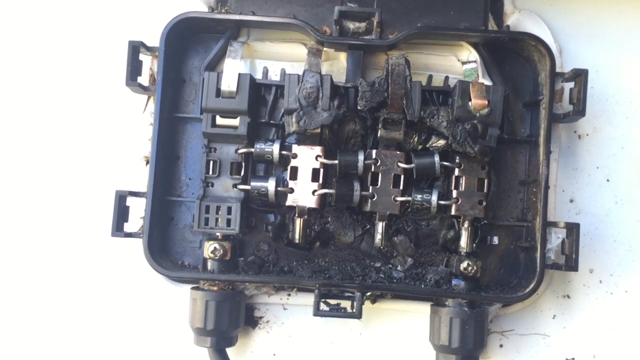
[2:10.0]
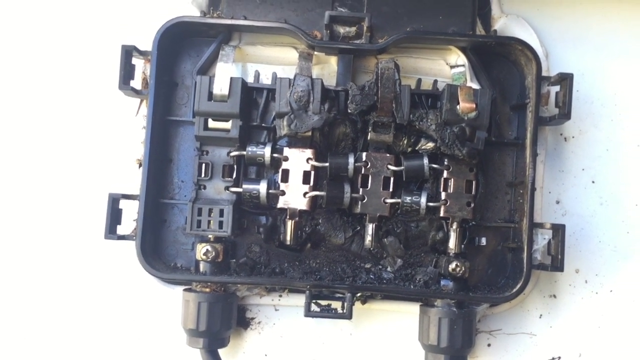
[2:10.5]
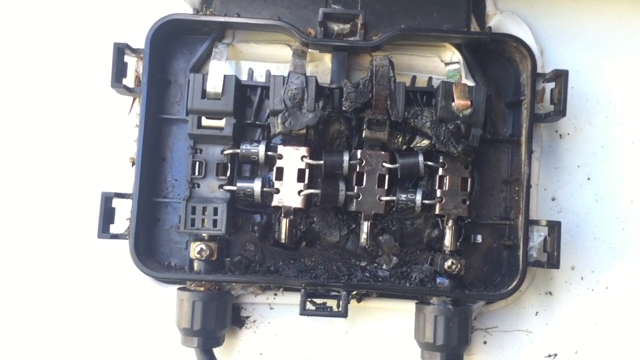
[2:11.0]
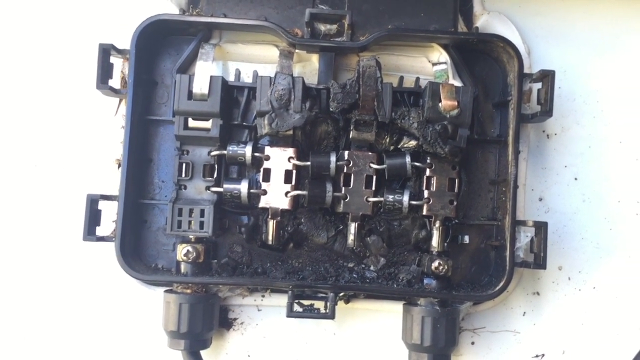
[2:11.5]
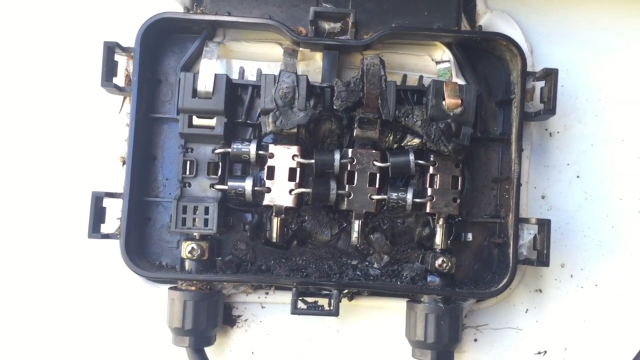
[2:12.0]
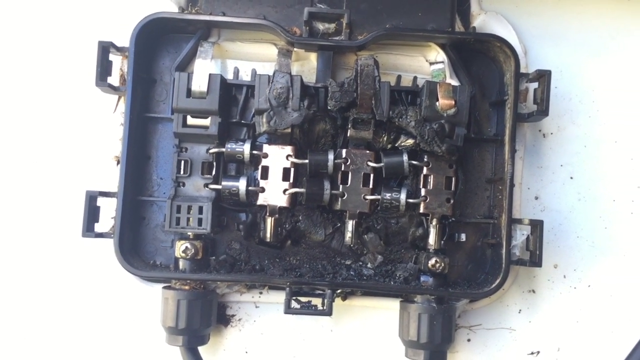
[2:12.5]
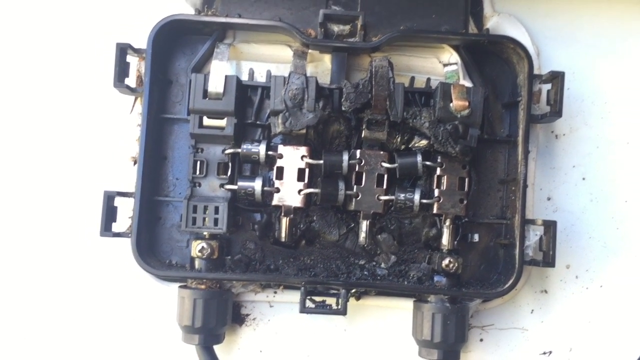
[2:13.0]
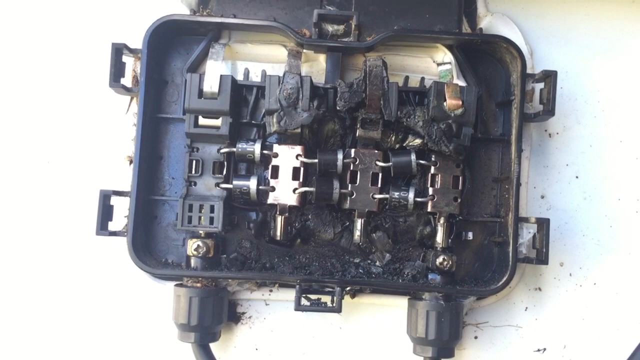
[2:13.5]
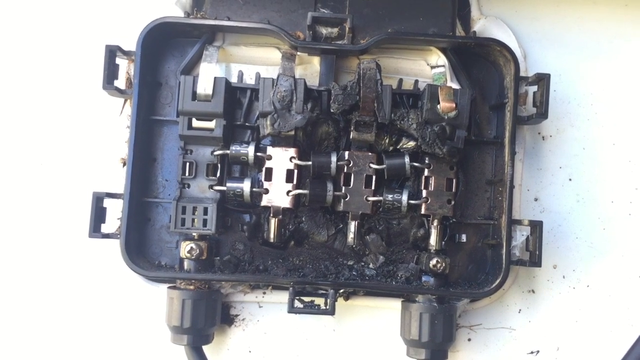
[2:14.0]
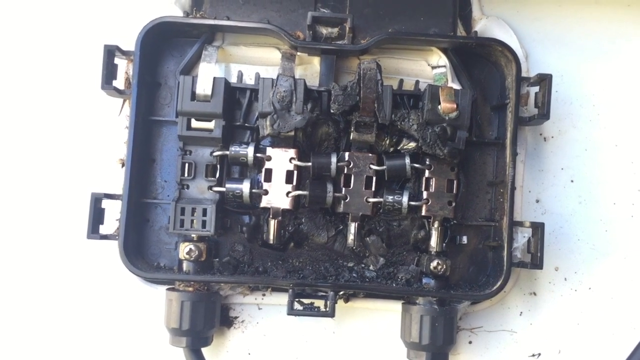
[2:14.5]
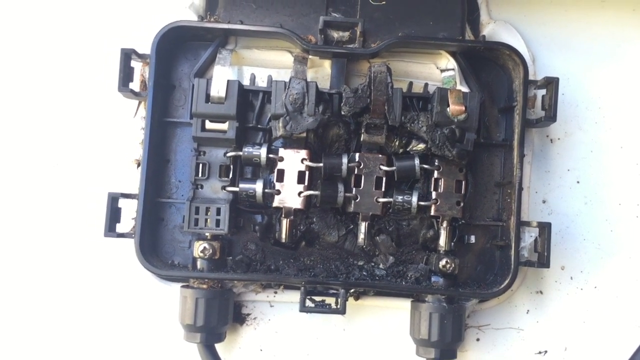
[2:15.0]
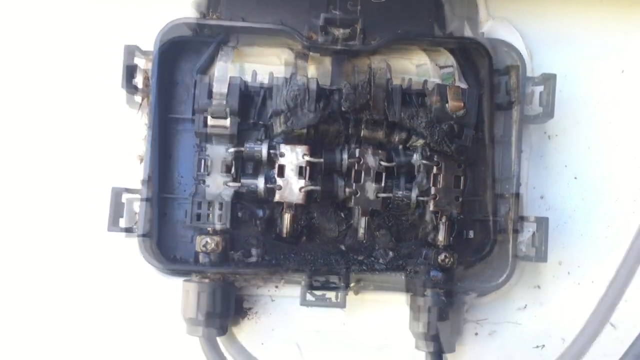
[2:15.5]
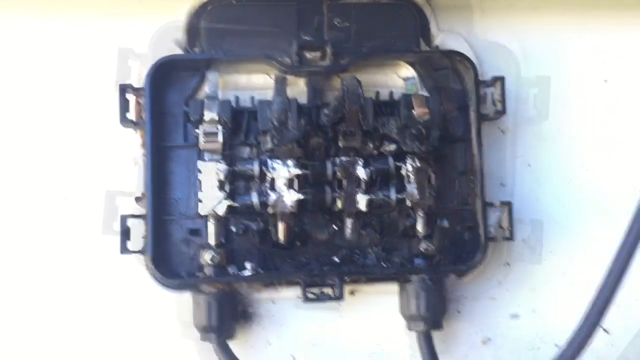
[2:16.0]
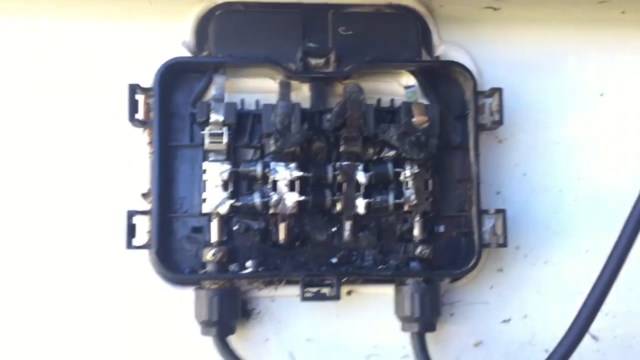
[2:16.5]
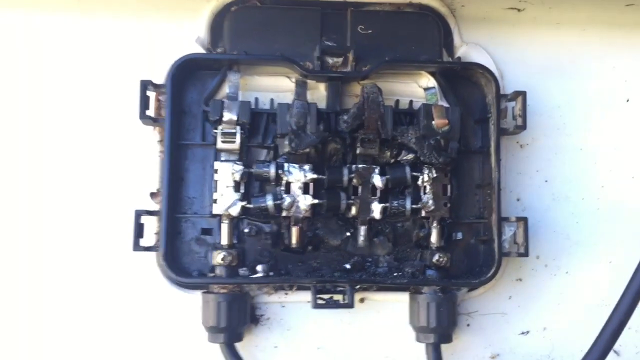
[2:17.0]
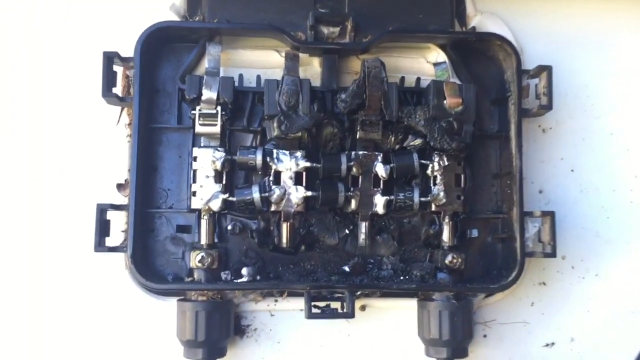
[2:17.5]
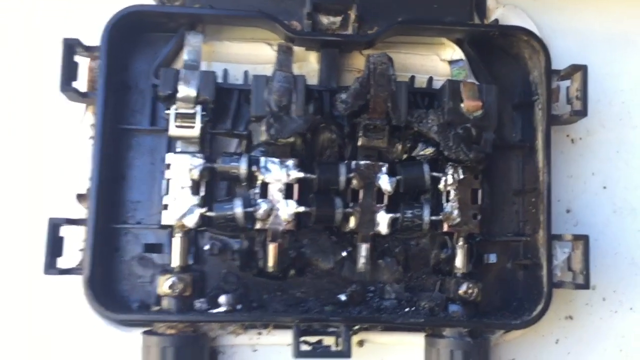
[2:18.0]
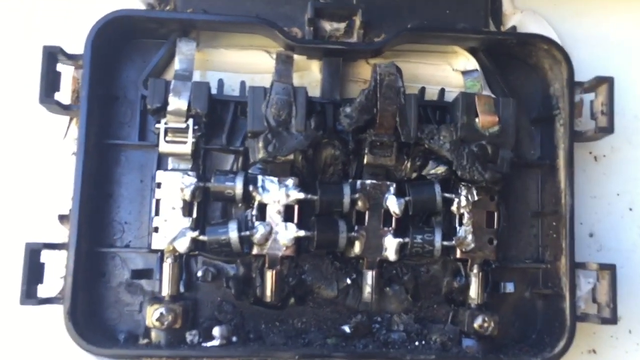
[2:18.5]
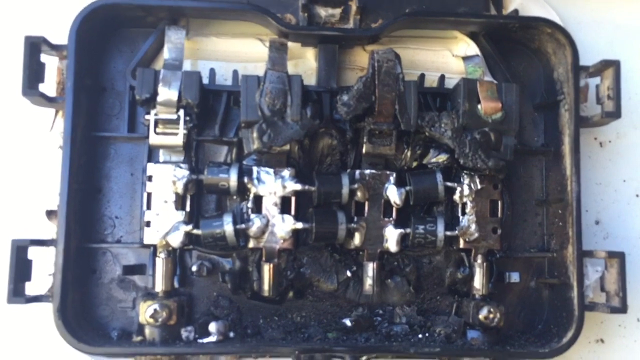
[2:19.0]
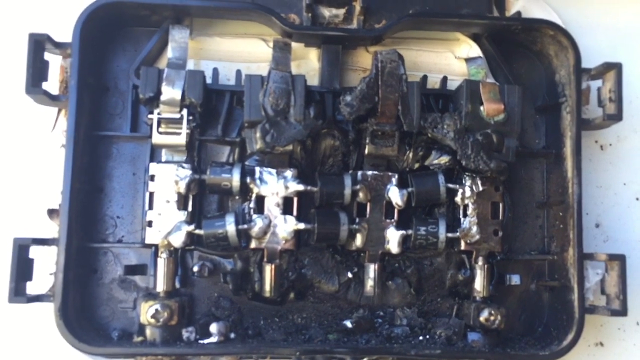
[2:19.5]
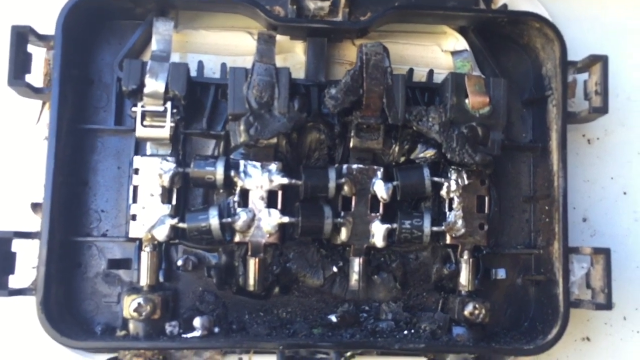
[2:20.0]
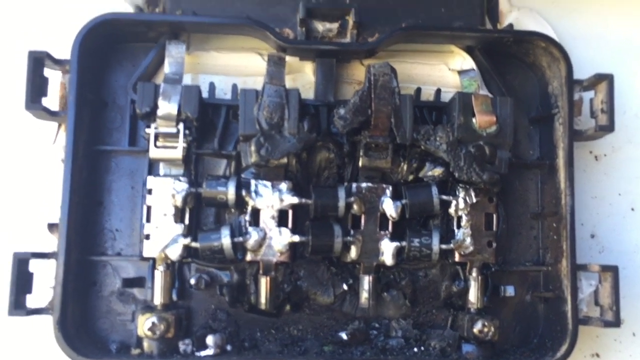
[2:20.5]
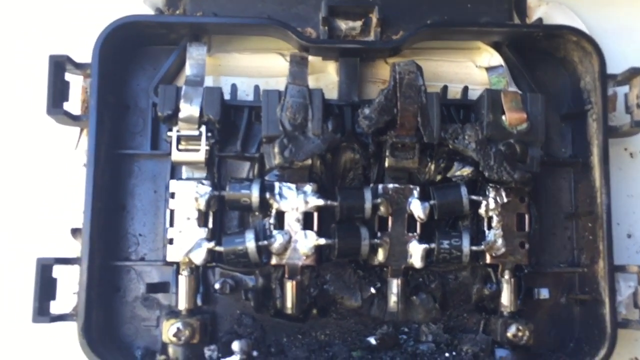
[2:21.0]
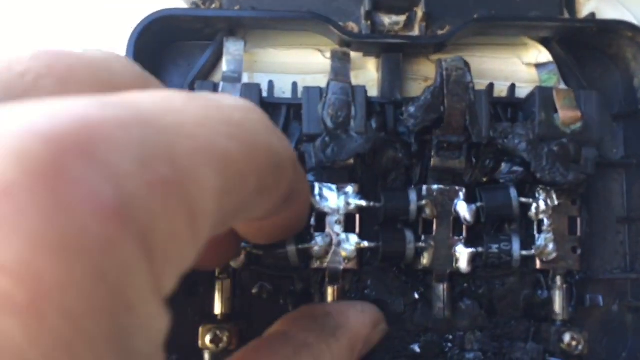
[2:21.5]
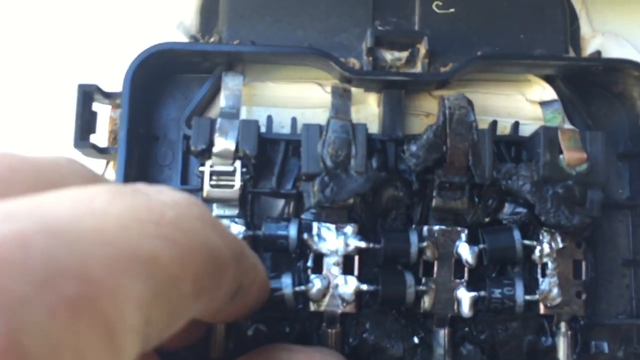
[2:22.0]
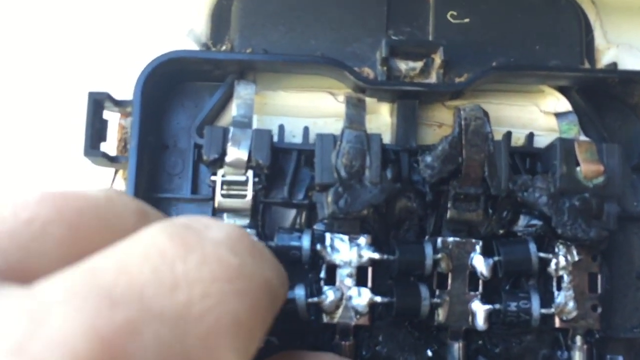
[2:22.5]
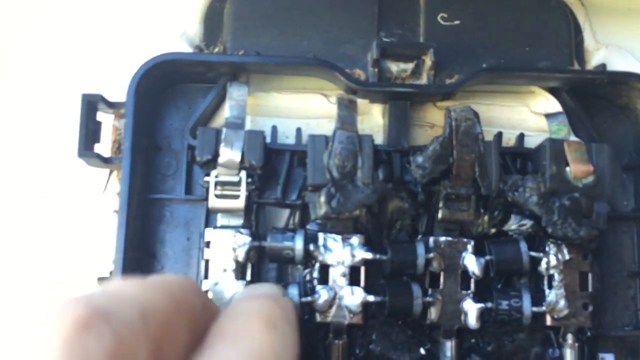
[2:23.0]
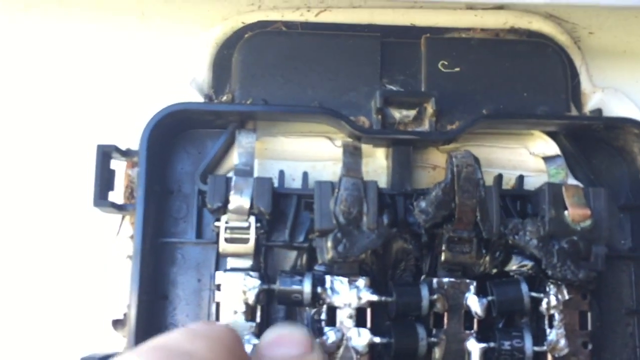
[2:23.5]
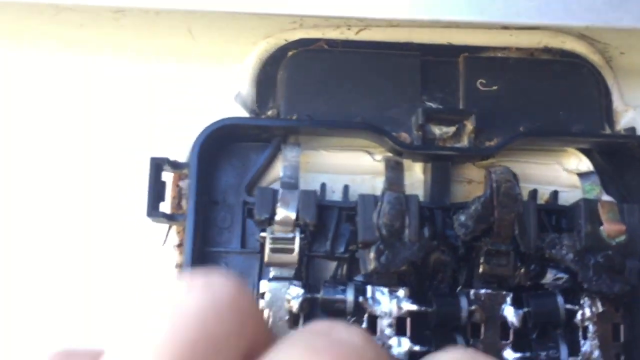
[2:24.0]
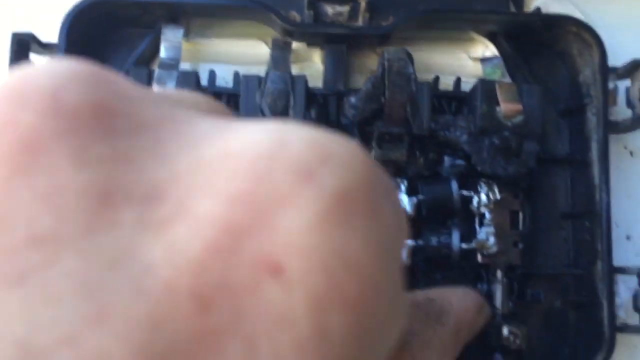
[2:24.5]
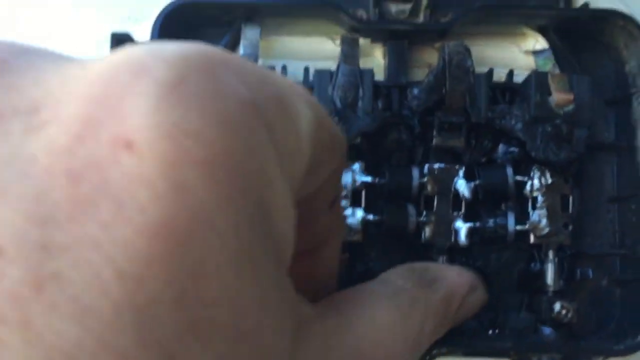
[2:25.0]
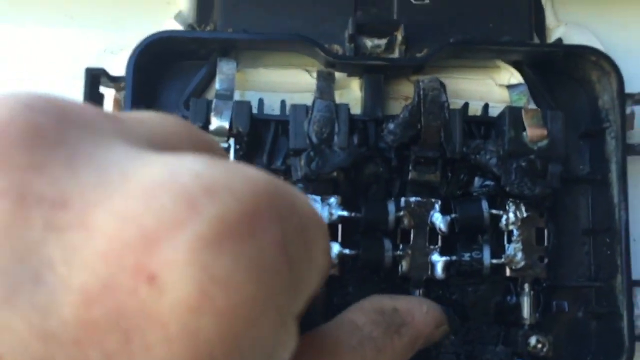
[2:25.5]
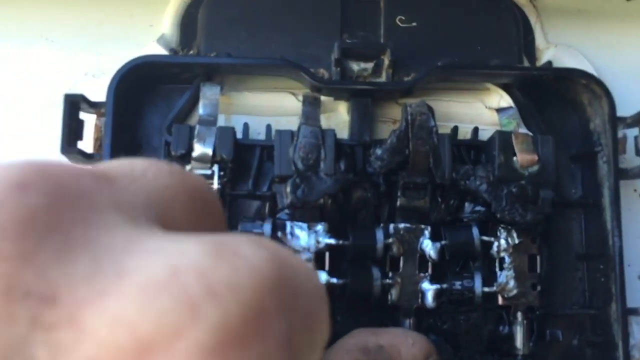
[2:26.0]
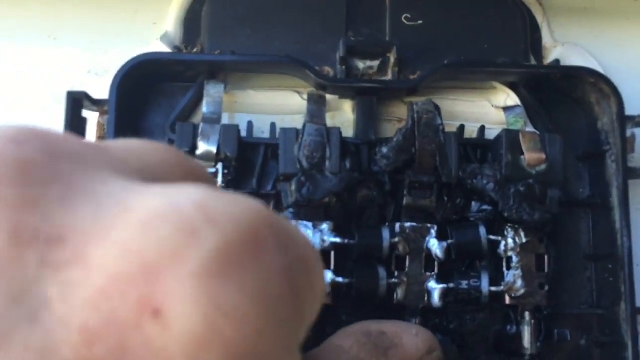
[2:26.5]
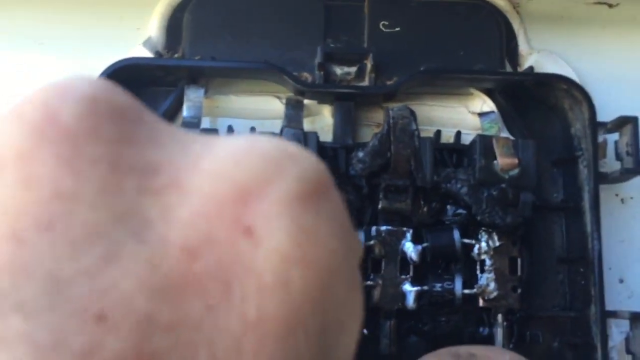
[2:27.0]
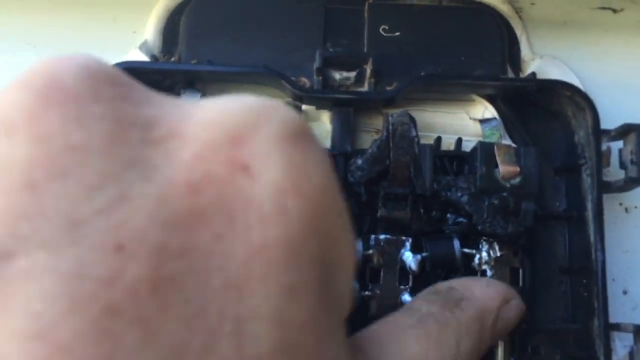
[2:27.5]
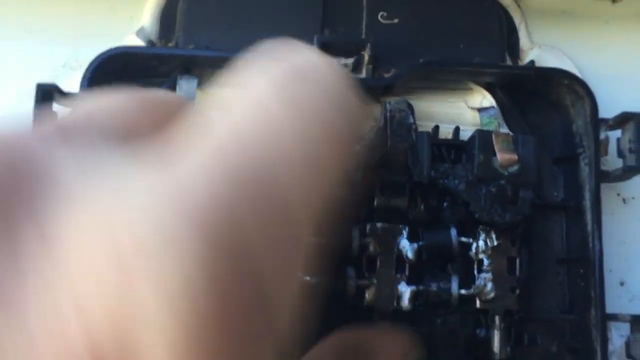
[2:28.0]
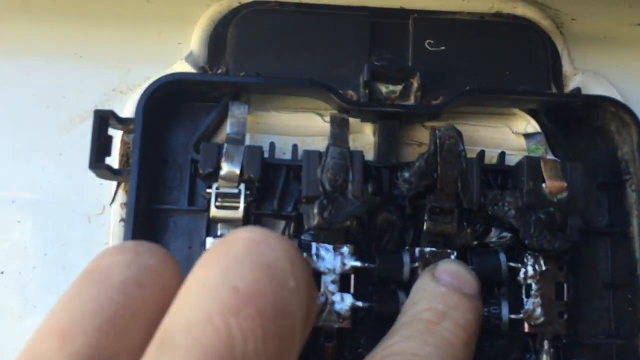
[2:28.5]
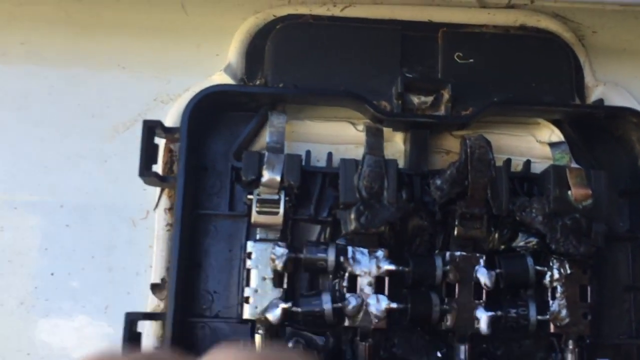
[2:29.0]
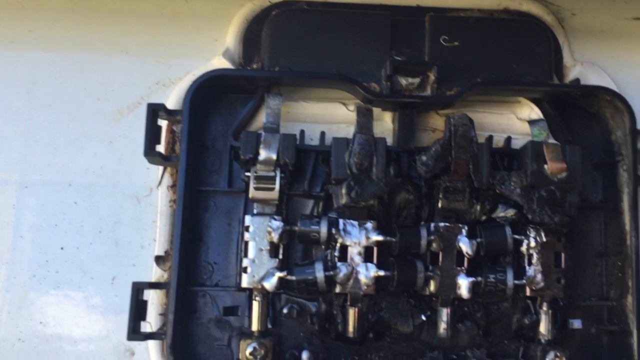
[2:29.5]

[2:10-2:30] A close-up shows what looks like a circuit breaker, likely related to the solar panels: a black rectangular box attached to a white wall that appears to be concrete, with two brackets on the left and two on the right. The top has already been pulled off, and the interior contains many circuits, small, primarily black openings, along with a few small white boxes with circuit openings in the lower left and lower right of the box. The camera keeps panning in and out slowly and quite shakily. The box may have been damaged. As the camera pulls out, two black cords are seen attached to the box; they come down slightly and then veer off to the right.